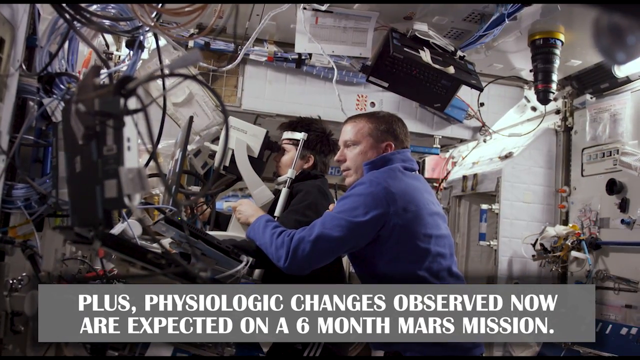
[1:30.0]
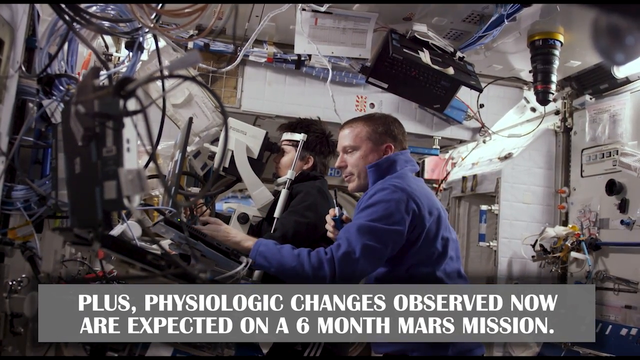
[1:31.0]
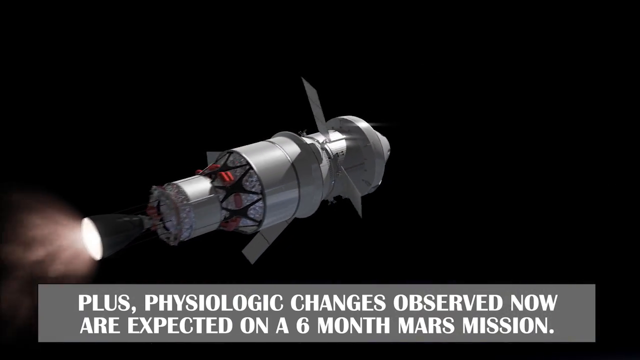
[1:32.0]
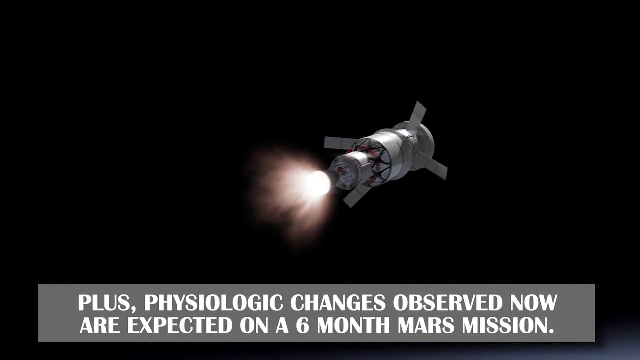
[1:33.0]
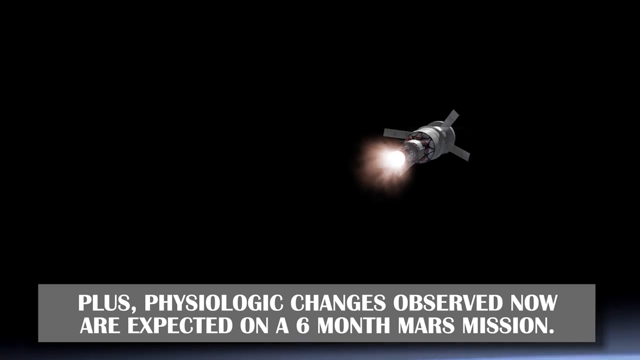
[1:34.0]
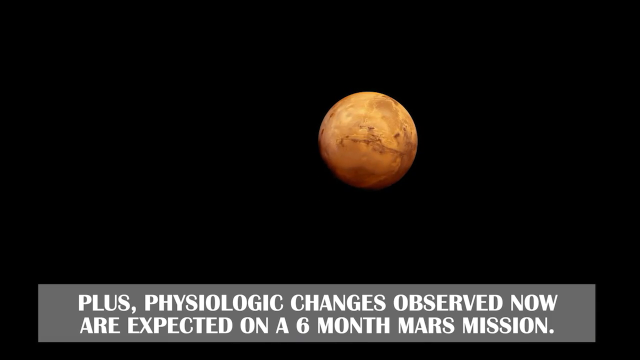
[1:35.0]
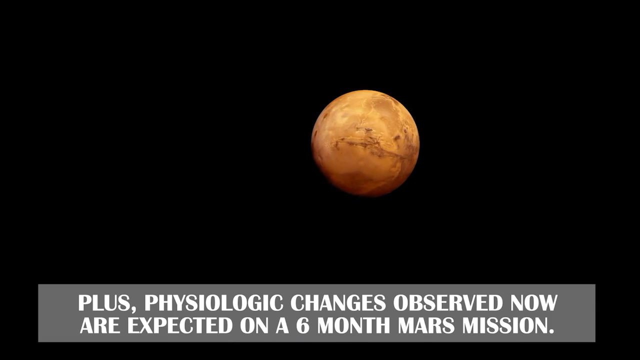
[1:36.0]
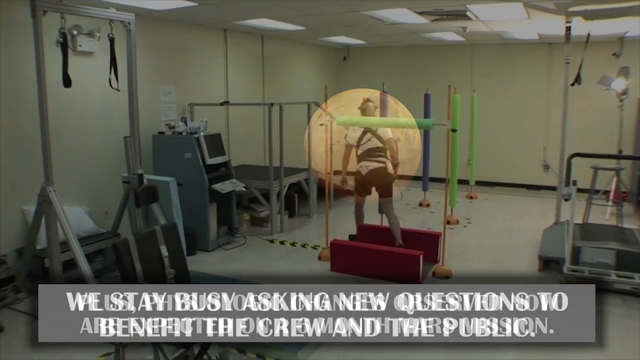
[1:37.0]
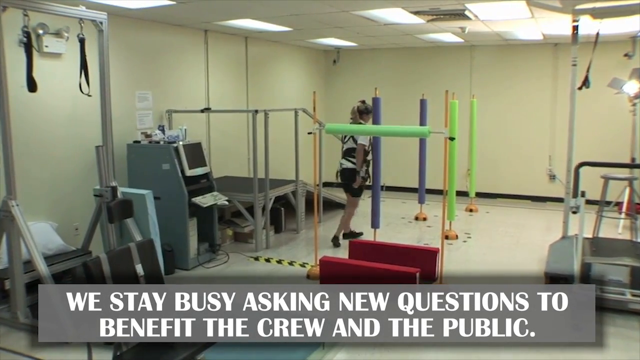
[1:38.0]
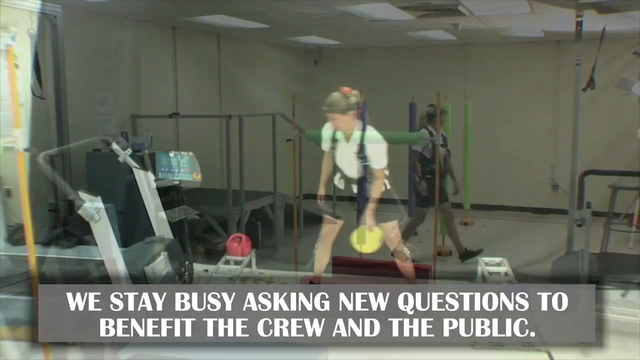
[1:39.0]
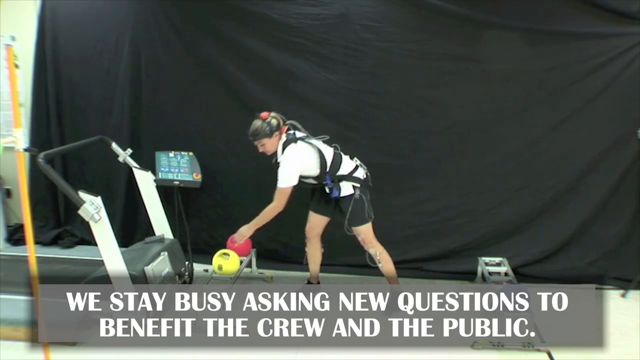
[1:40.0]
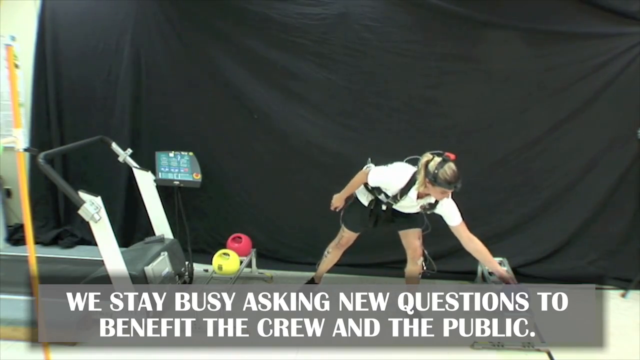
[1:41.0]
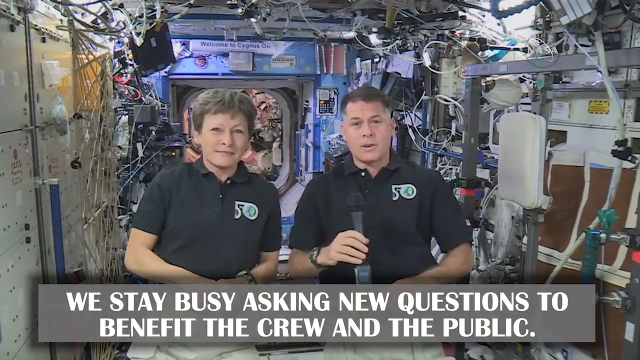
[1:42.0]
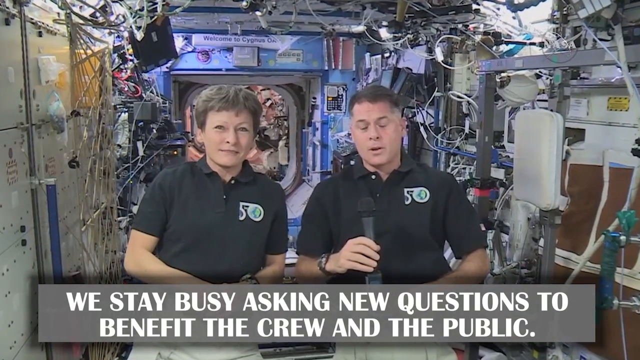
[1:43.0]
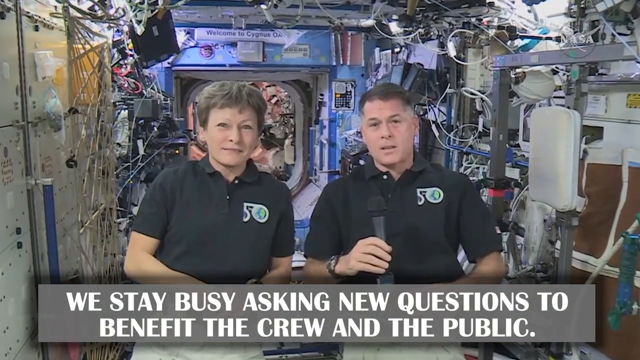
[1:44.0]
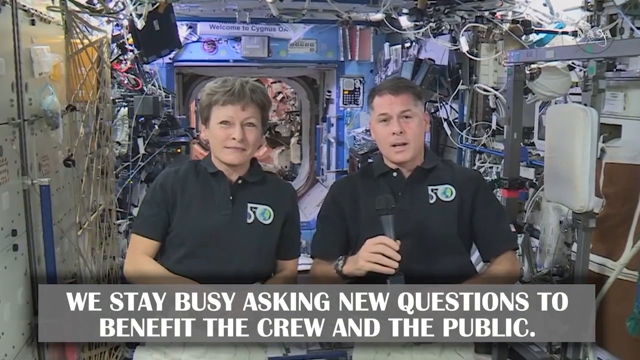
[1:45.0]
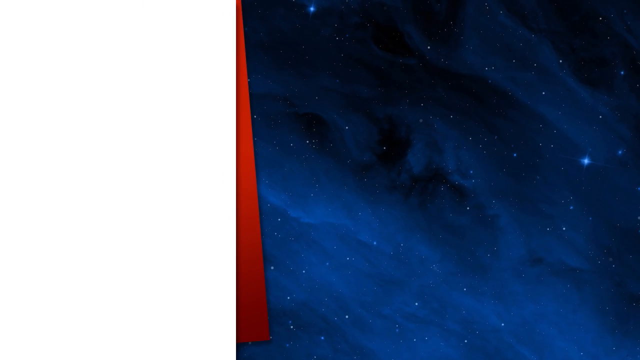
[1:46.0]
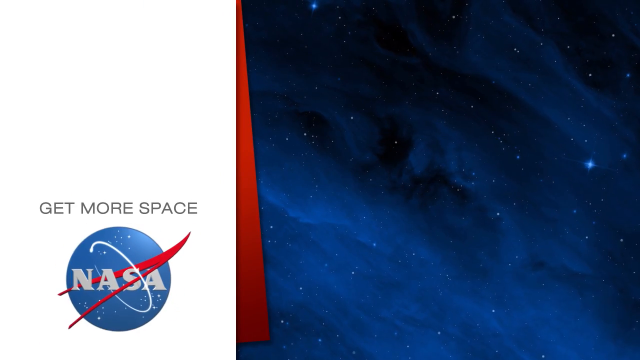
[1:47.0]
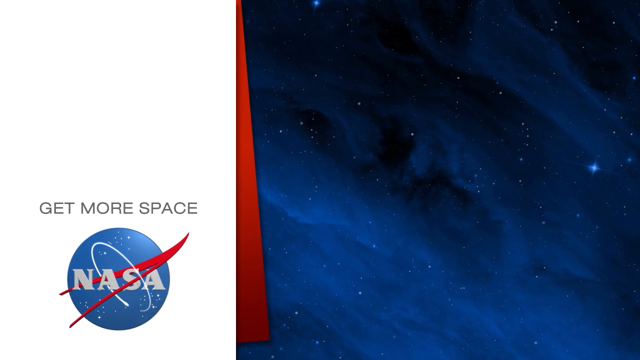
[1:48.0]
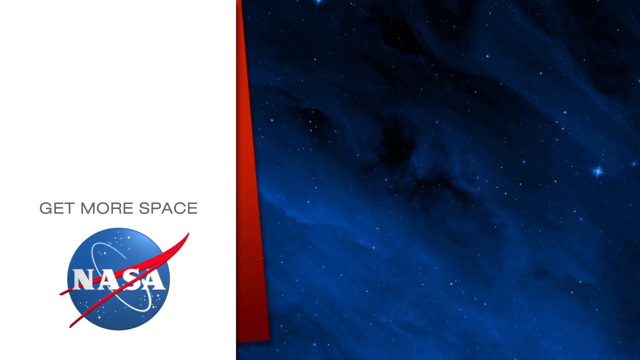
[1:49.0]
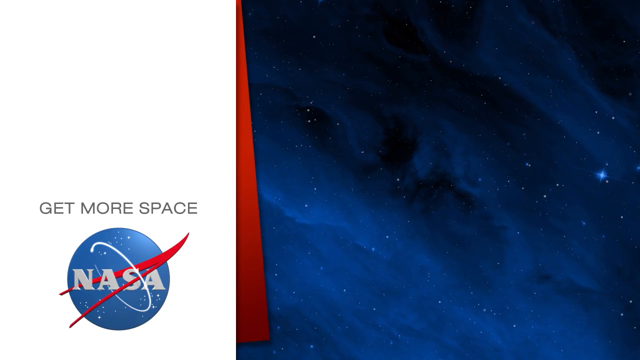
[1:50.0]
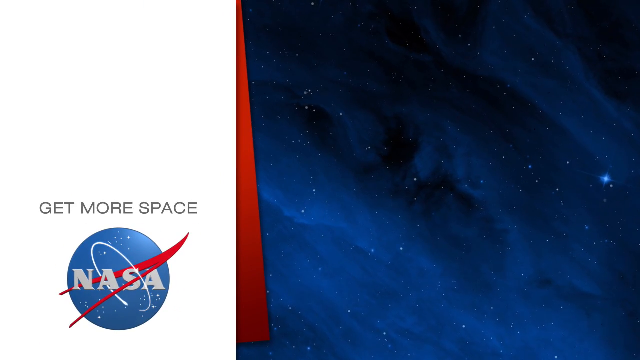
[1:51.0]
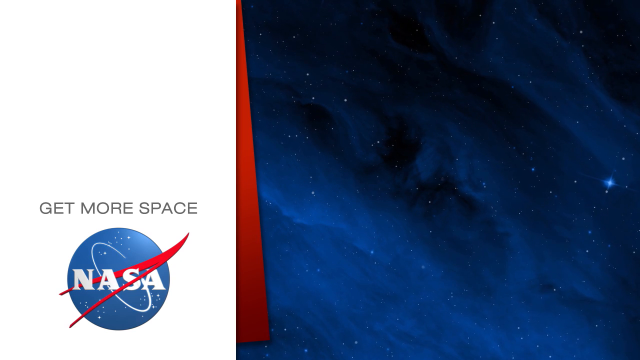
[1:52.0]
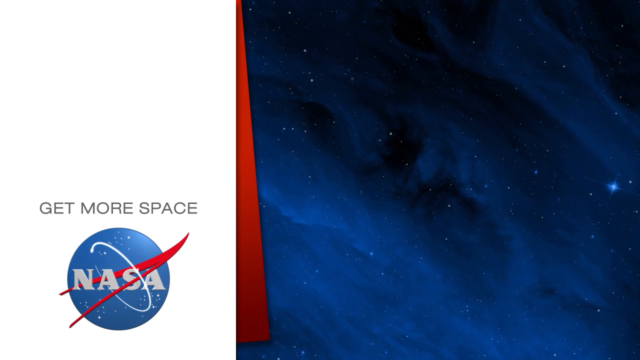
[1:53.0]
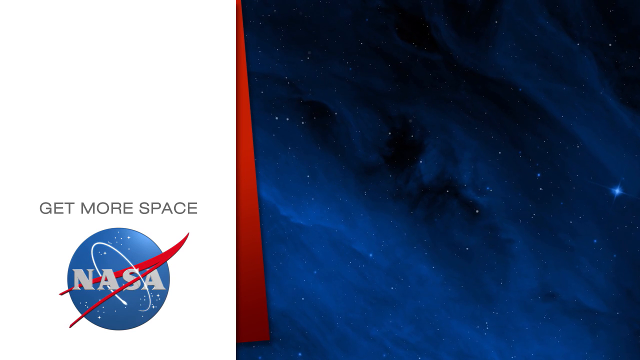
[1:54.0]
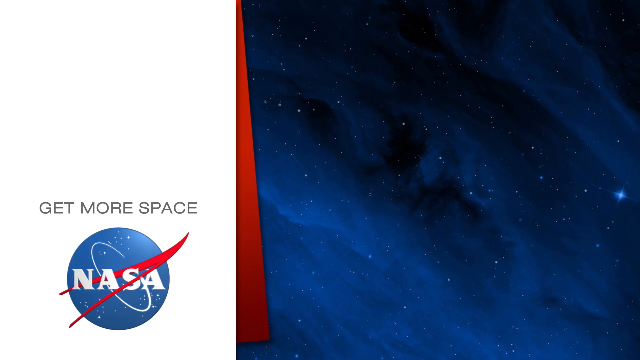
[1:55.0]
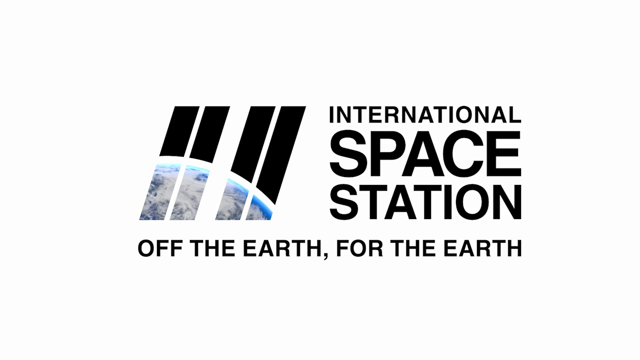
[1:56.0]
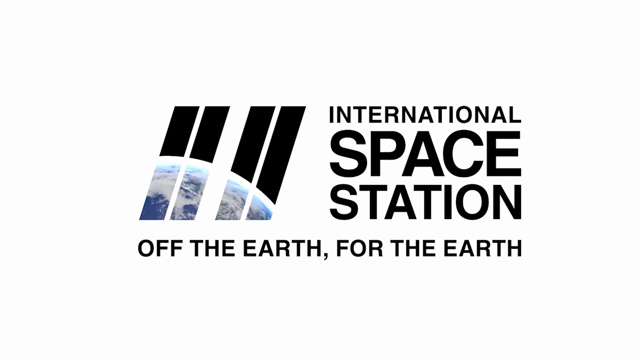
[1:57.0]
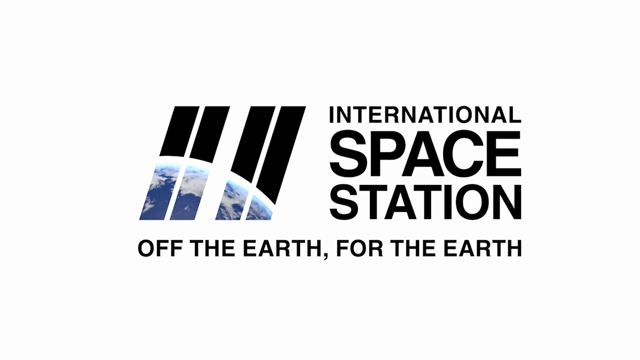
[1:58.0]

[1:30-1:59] A person gets their eyes checked in an ophthalmic machine while a man in a long-sleeved blue sweatshirt adjusts knobs, probably on the eye machine. The entire room is full of cords and computer equipment. Gray text along the bottom, outlined in a darker gray text box, reads "plus physiologic changes observed now are expected on a six-month Mars mission." Next is a gray, computer-animated image of a satellite in space with flame shooting out of its bottom, apparently floating in a black sky. Then an orangey-red Mars appears on a totally black screen, with the same text along the bottom. The video fades into a woman walking through what look like pool noodles standing up, three of them in the middle of the room; she is kind of zigzagging, maybe figure-eighting, through them around the room. There appears to be a gray wheelchair-type ramp, a computer to the left of that, and to the left of that some stirrups hanging from a bar; there are also stirrups hanging on a bar on the right side of the screen. Gray text in a gray text box along the bottom reads "we stay busy asking new questions to benefit the crew and the public." Next, a woman facing the camera moves kettle balls from her left hand over to her right side; there might be a treadmill to her right, and a big black cloth hangs from the ceiling behind her. The same text remains at the bottom. The video fades into a man and a woman talking, wearing matching black polo shirts with a white and green emblem on the left breast pocket area. They stand in a room that looks like they could be working at a space station, with cords everywhere, and the man holds a microphone. The same text appears along the bottom in the same font and coloring. It then fades into a moving image split in thirds: the first third reads "get more space, NASA" on the NASA emblem, and the right two-thirds look like a space image of darkness with lit-up spots of stars as the camera kind of floats through them. Finally, black text on a white background in the middle of the screen reads "International Space Station off the Earth for the Earth," followed by a rotating image of the Earth as viewed from space.